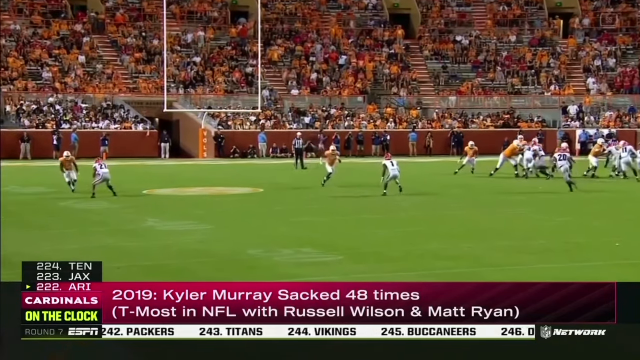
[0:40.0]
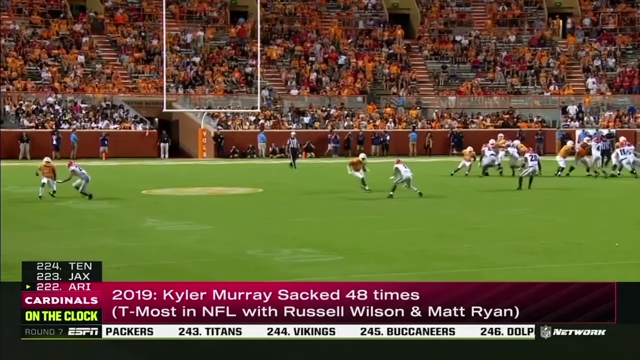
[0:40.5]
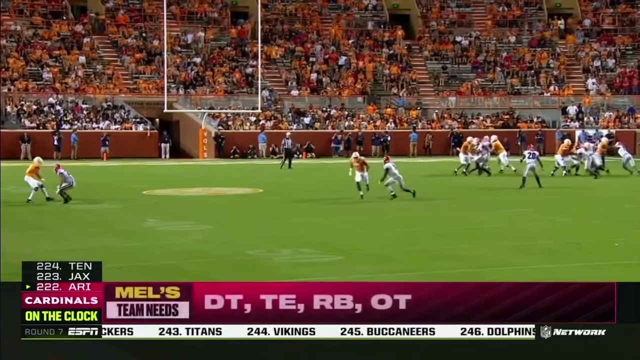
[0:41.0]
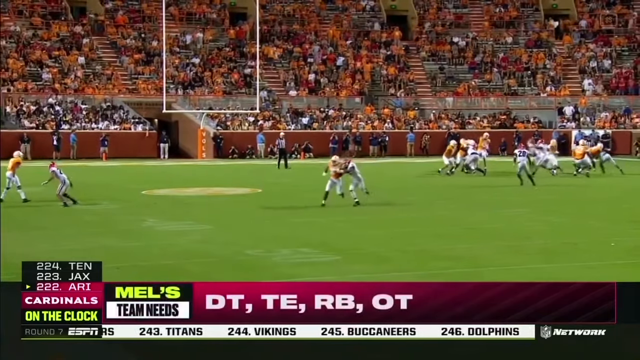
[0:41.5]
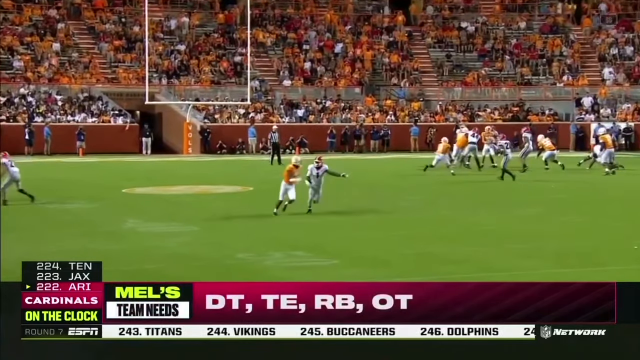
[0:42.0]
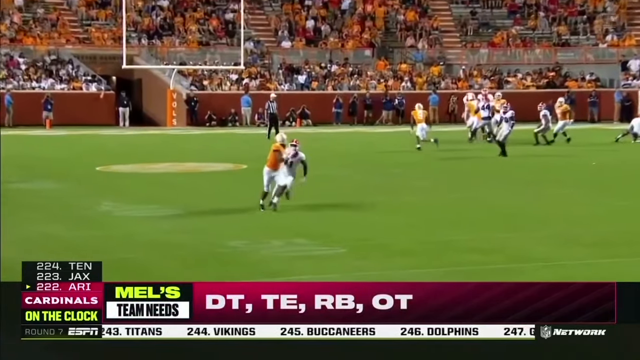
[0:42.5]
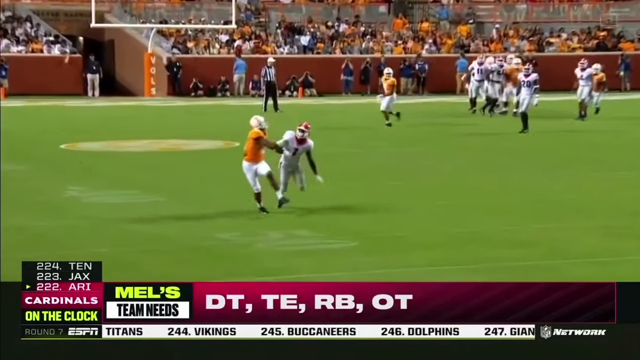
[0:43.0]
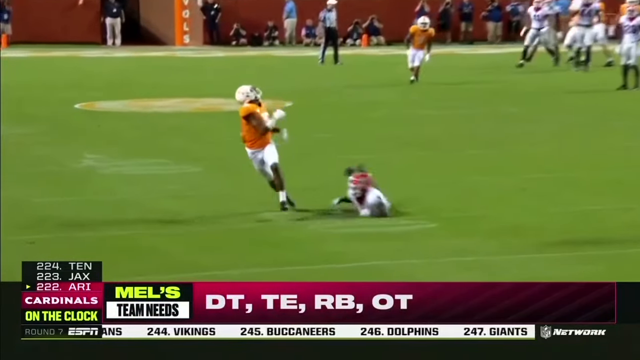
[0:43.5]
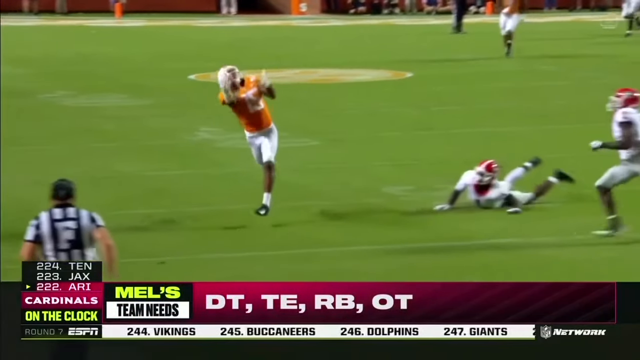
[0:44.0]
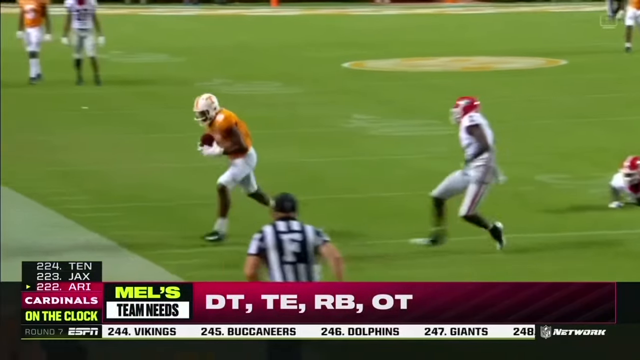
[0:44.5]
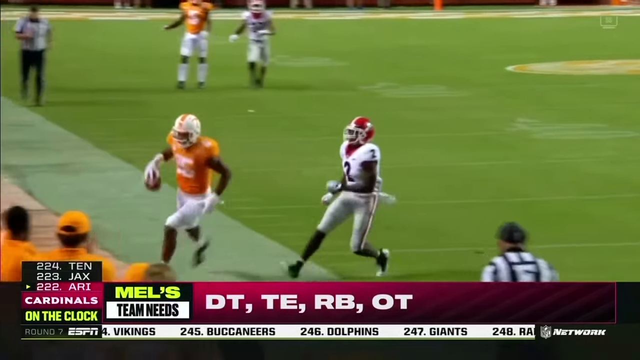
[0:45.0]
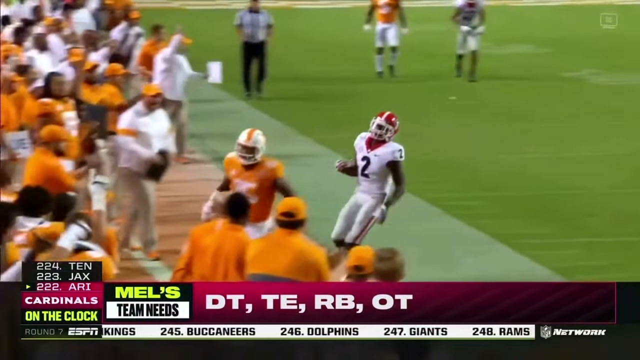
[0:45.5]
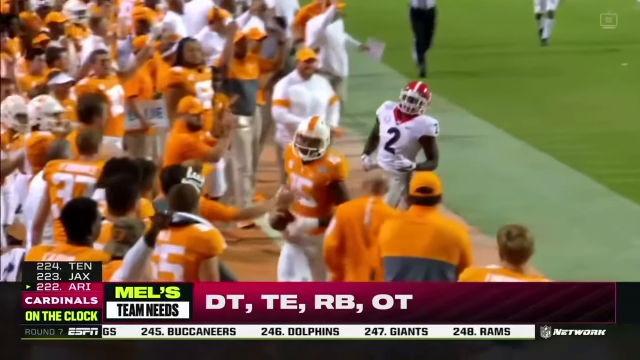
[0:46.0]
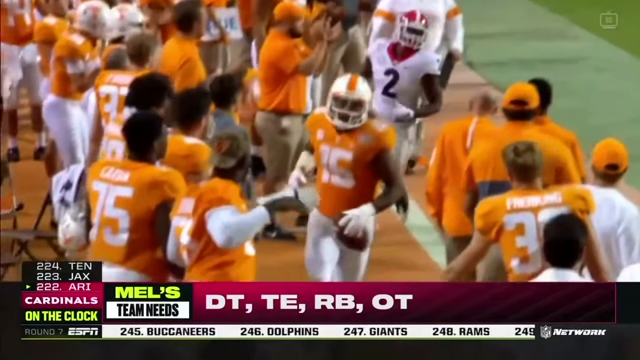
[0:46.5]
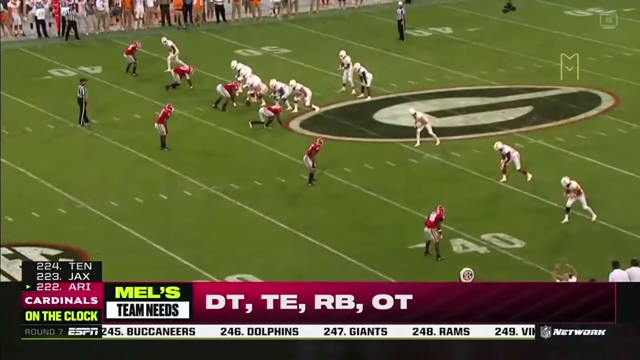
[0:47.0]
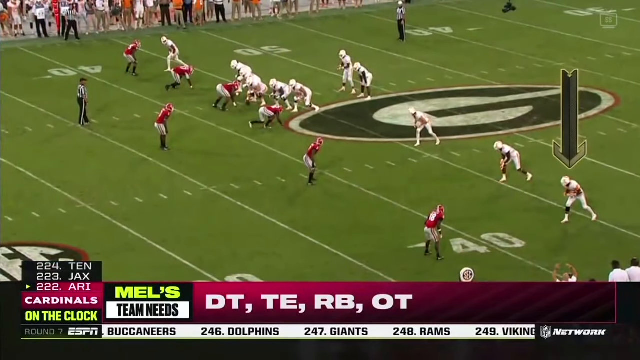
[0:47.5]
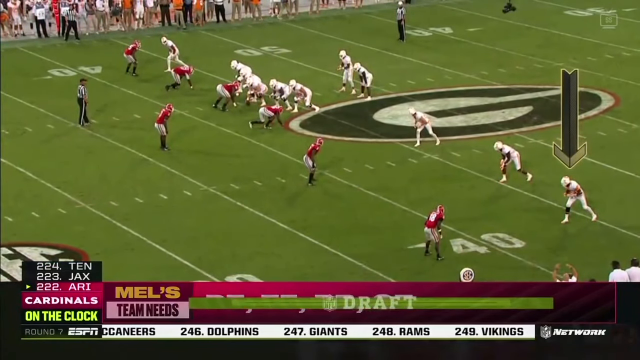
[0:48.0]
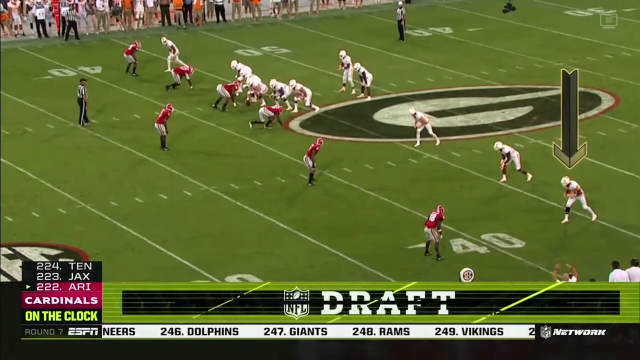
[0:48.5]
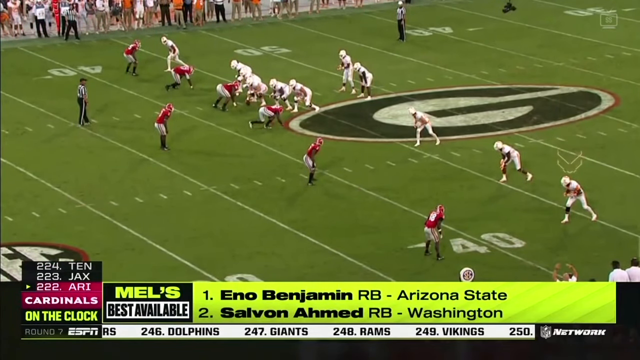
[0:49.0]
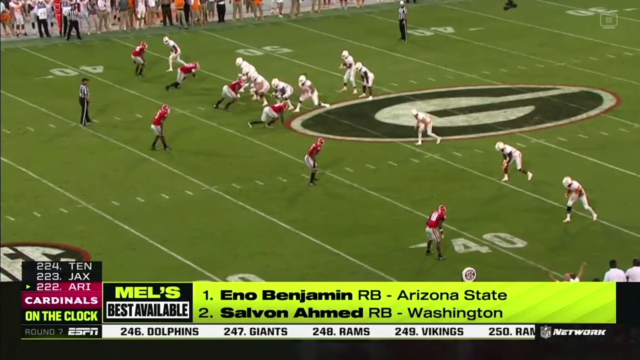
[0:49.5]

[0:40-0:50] Footage of a football game plays in the background, showing number 15, Juwan Jennings, catching a ball. A Georgia game is shown, with a replay repeating over and over as he catches a long pass and then runs out of bounds. Text for 2019 reads "Kyler Murray sacked 48 times" and "most in NFL with Russell Wilson and Matt Ryan." Draft picks are listed: pick number 224 is Tennessee, pick number 223 is Jacksonville, pick number 222 is Arizona, with "Cardinals" underneath.